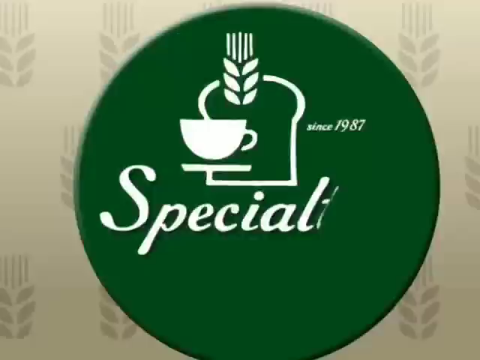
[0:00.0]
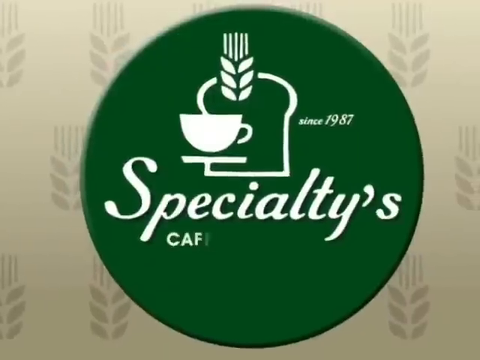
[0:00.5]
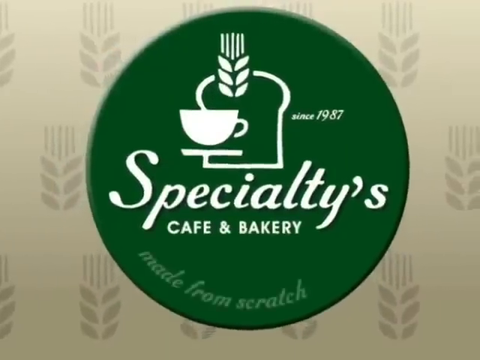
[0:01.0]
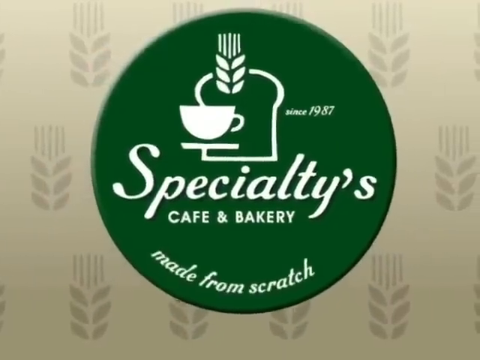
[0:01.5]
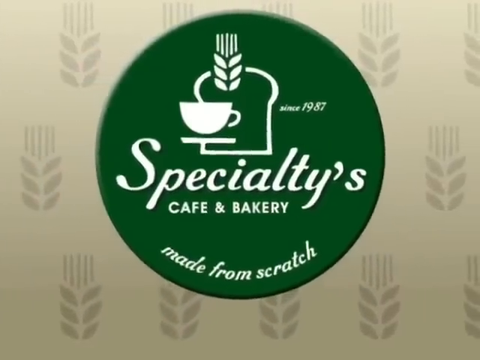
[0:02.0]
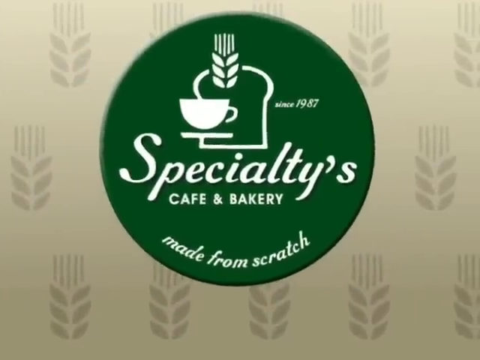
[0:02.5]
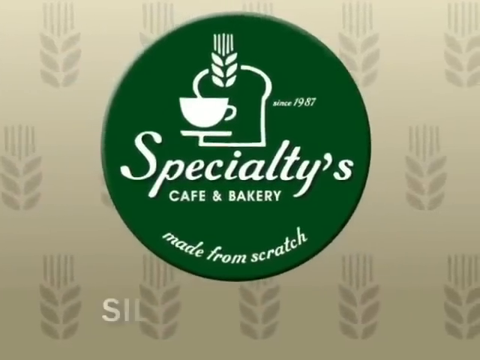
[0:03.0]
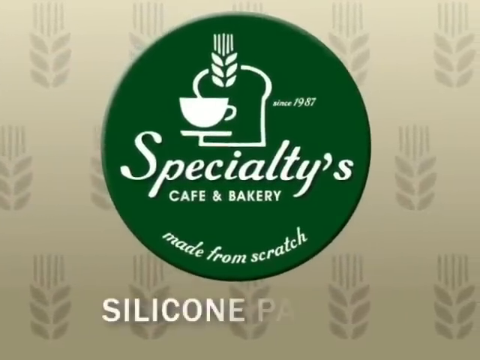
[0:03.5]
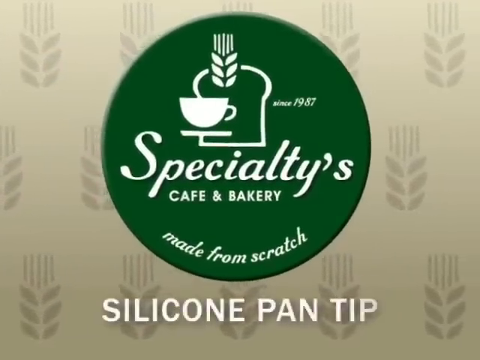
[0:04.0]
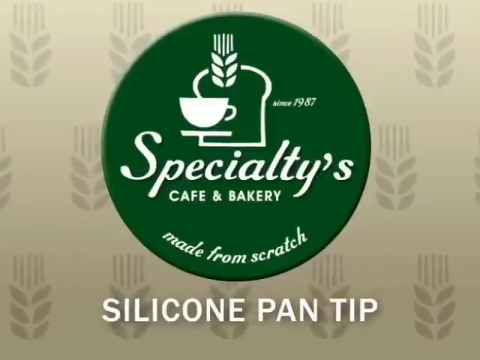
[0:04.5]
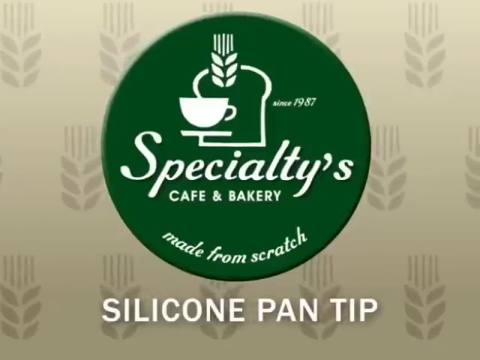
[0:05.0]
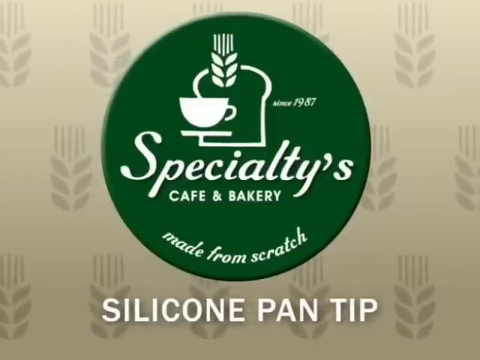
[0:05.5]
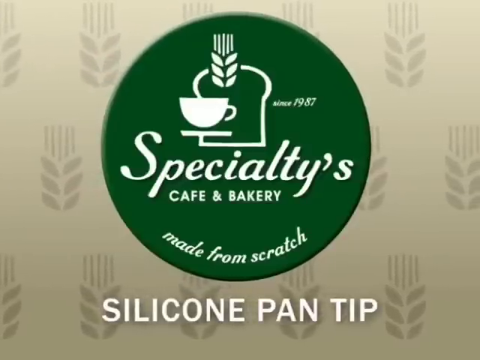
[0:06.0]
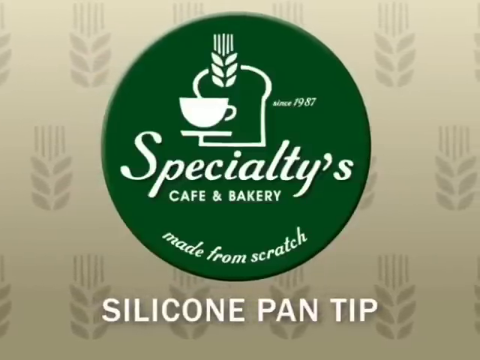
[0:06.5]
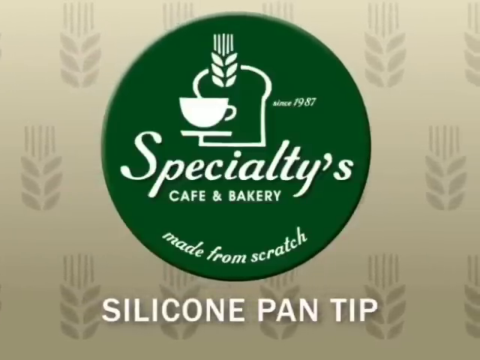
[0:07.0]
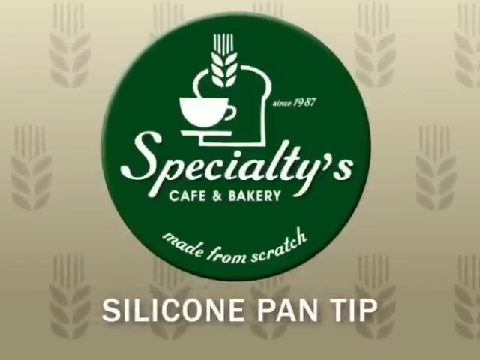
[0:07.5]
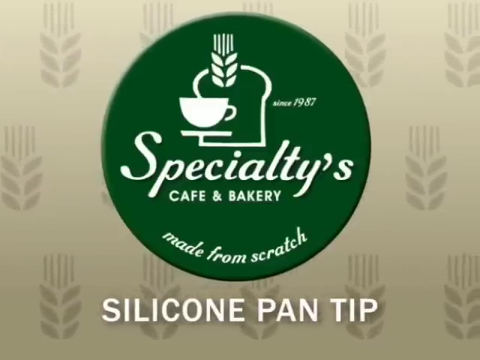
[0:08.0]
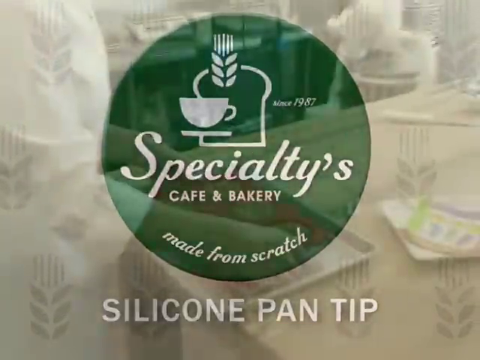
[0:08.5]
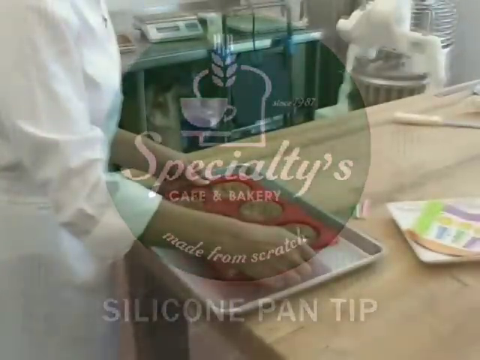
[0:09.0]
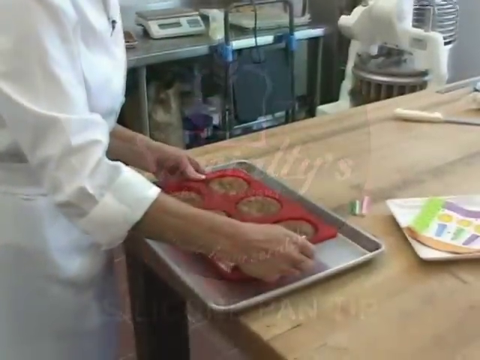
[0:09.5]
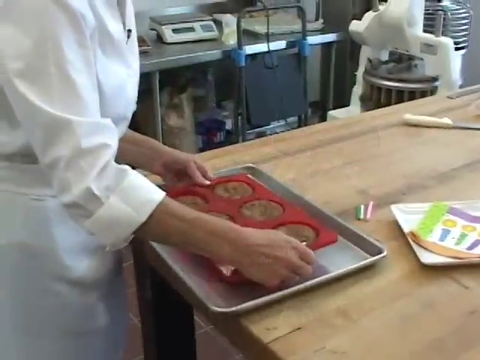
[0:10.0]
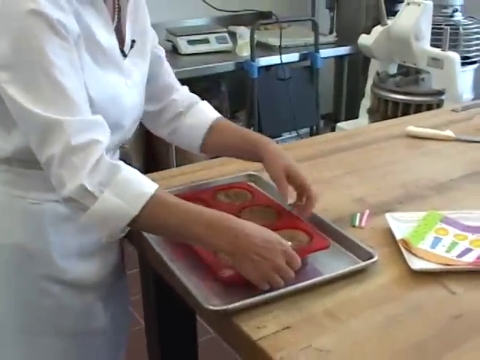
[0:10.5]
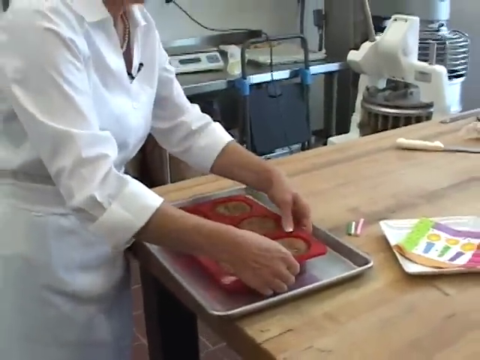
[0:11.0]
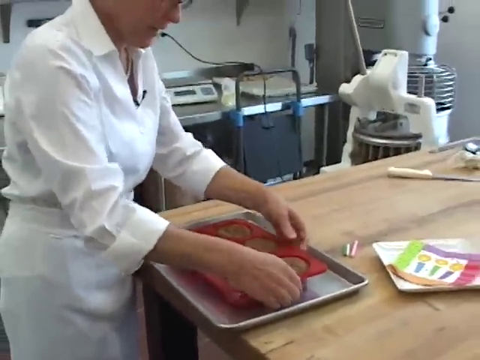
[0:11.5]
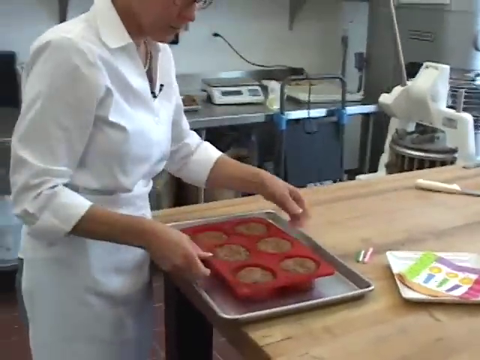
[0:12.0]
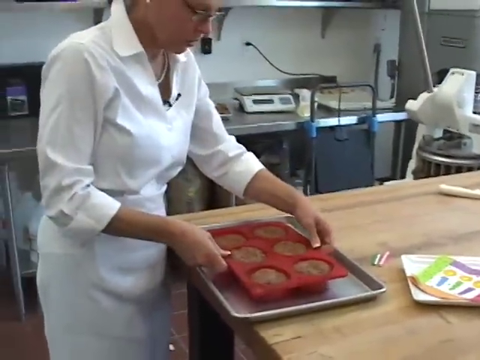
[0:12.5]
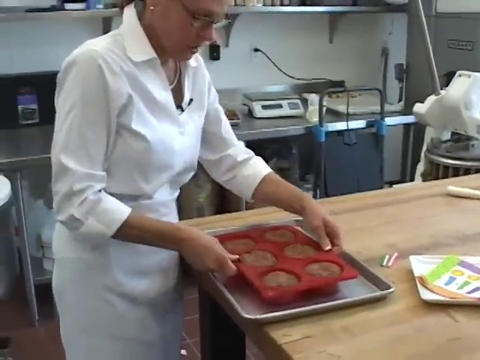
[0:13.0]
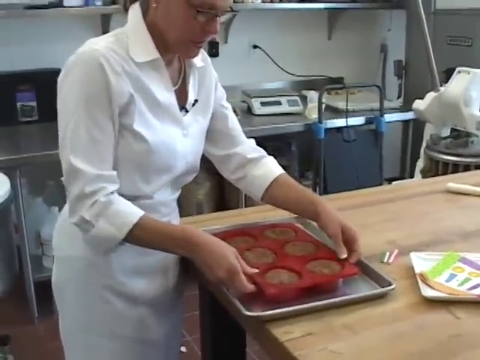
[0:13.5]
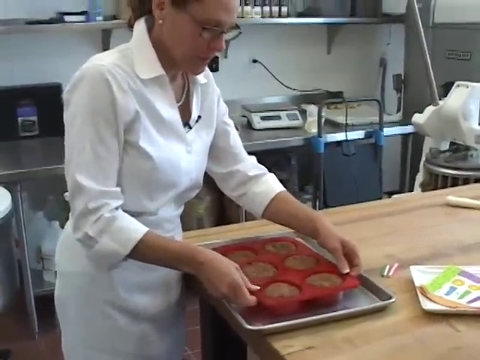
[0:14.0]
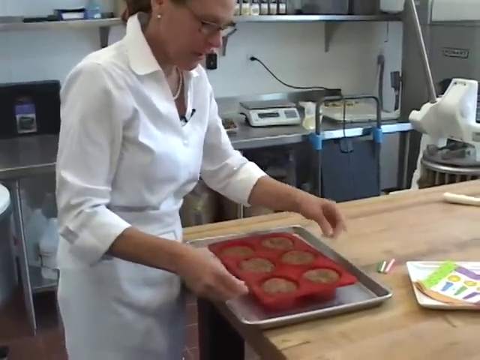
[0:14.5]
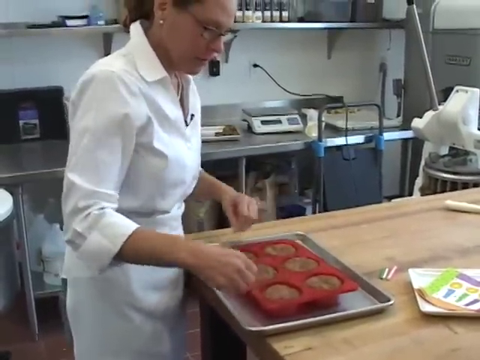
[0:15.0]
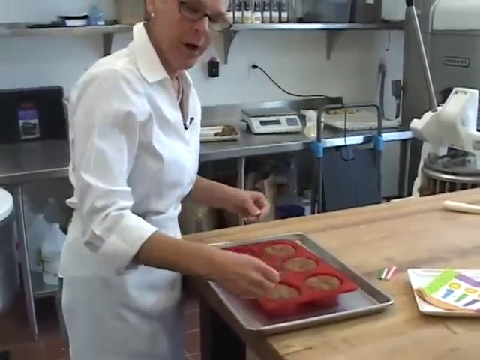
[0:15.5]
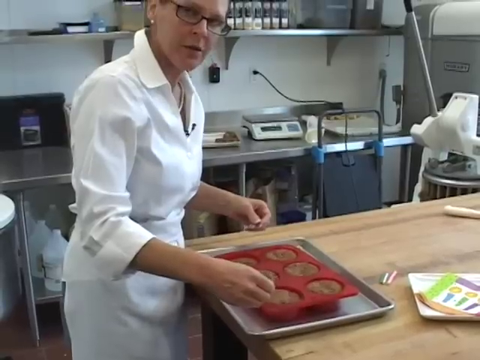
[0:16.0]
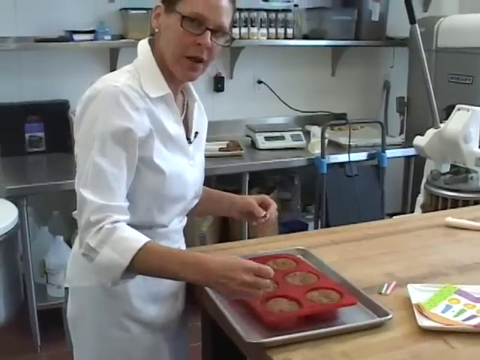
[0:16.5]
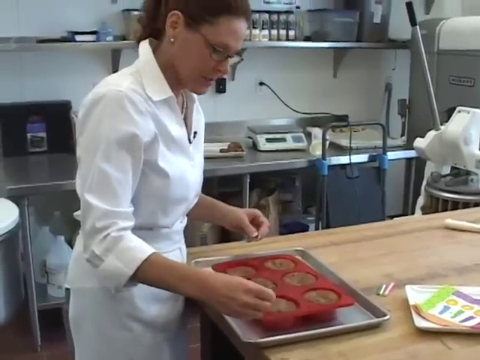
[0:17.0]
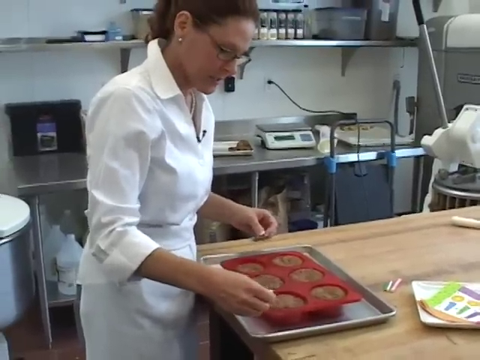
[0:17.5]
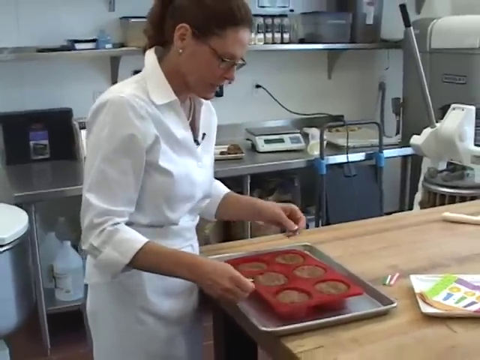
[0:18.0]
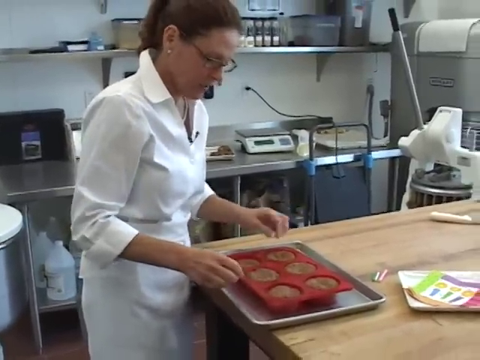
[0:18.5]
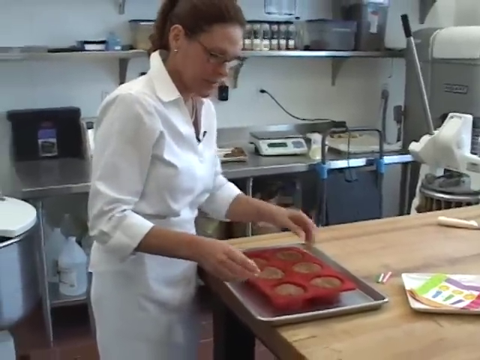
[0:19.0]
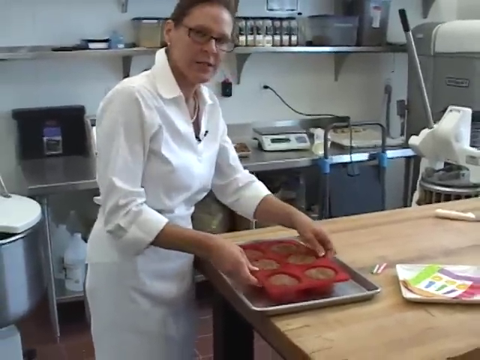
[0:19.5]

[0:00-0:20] The video opens on an image with a gray background and, in the middle, a green circle with white writing on it. The white writing includes what appears to be coffee and bread, text next to it beginning "since", and below it the word "special". More white writing then appears within the same circle: "coffee and bakery made from scratch". This is the brand's logo. After the logo, a woman is shown busy baking in her kitchen, which may be the workplace of a bakery, since many parts of a weighing machine and various other machines used in such a workplace are visible. She is trying to remove cupcakes from a red rubbery thing; they appear to be hot as she stretches it, and she keeps releasing her hands as if she has felt the heat.